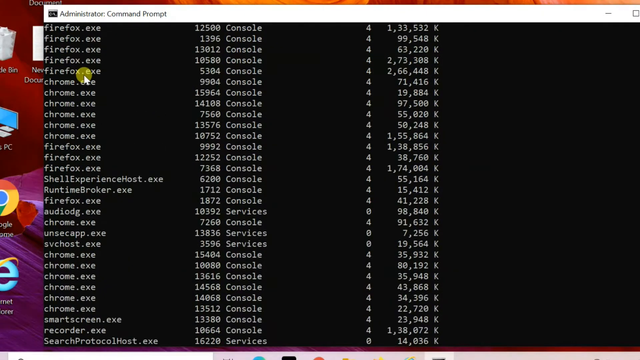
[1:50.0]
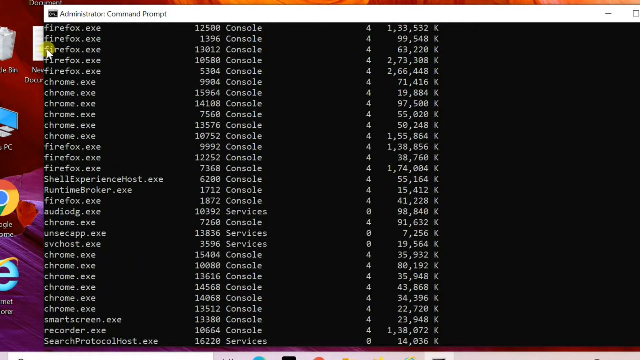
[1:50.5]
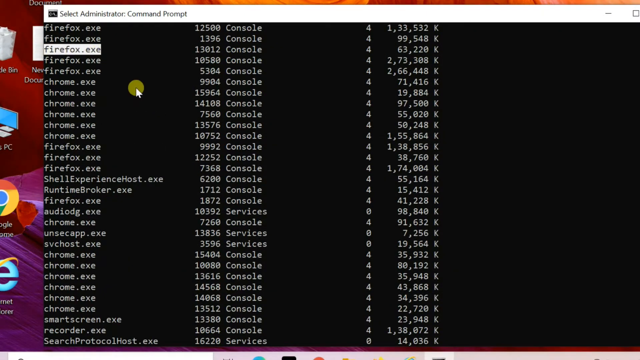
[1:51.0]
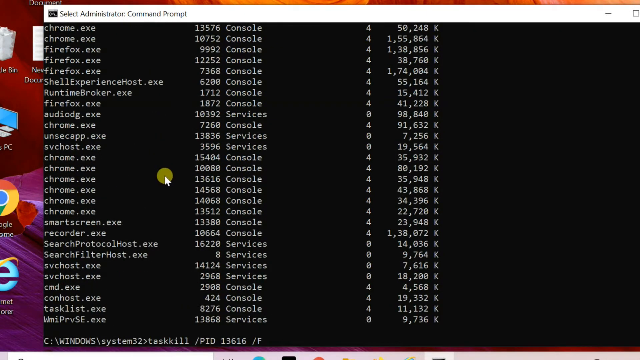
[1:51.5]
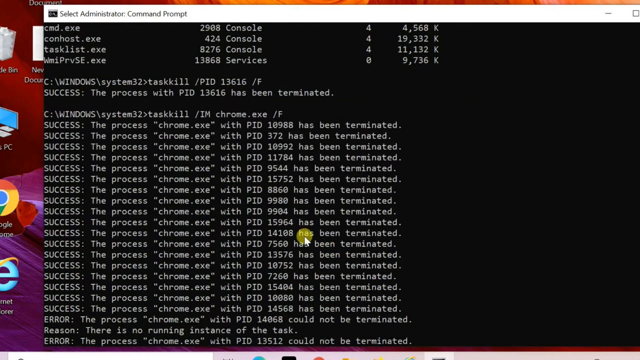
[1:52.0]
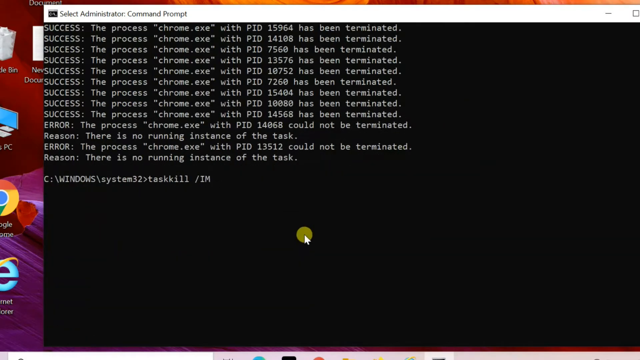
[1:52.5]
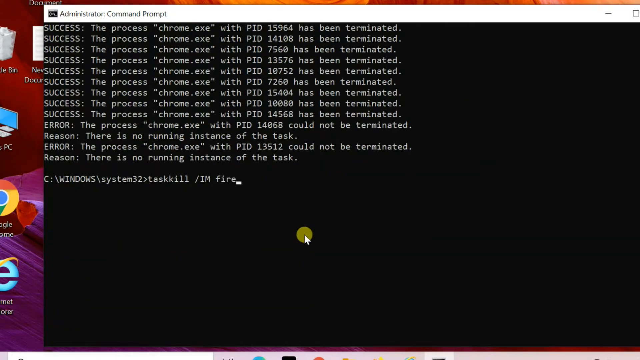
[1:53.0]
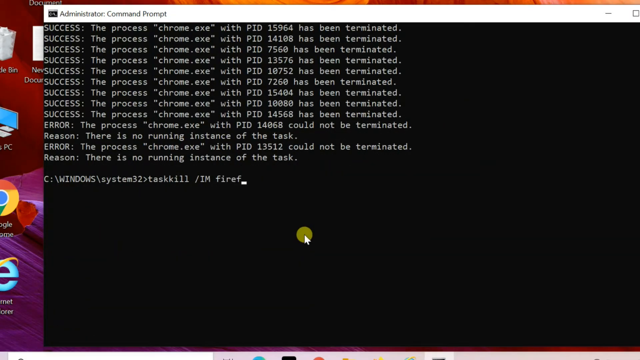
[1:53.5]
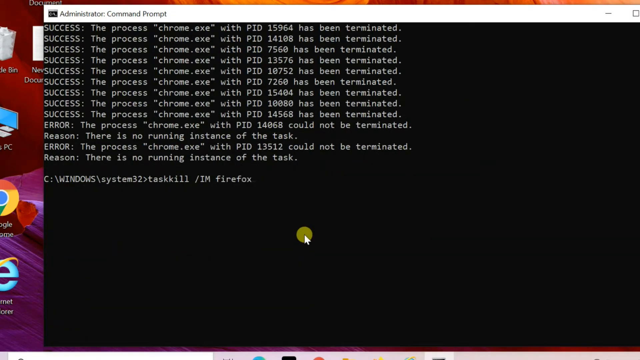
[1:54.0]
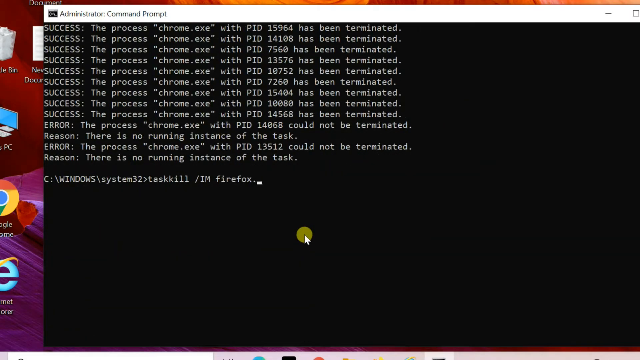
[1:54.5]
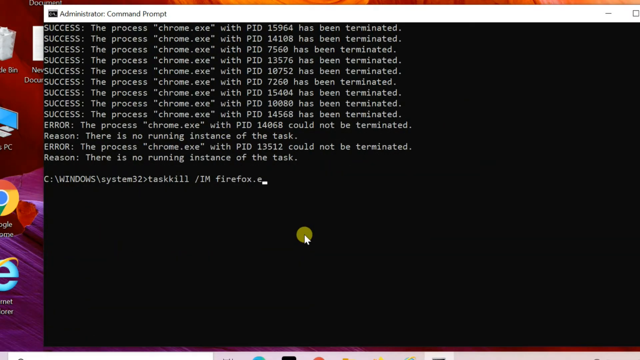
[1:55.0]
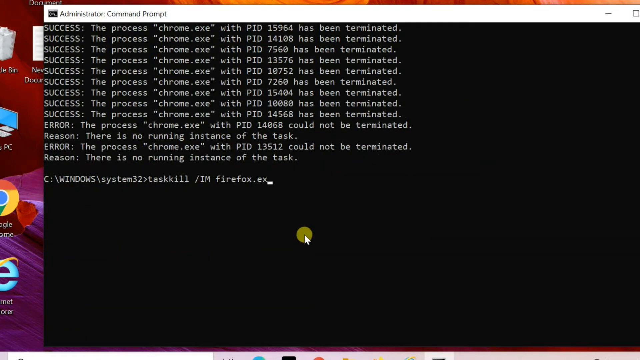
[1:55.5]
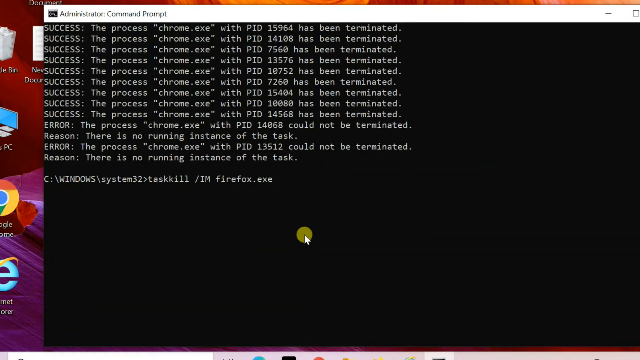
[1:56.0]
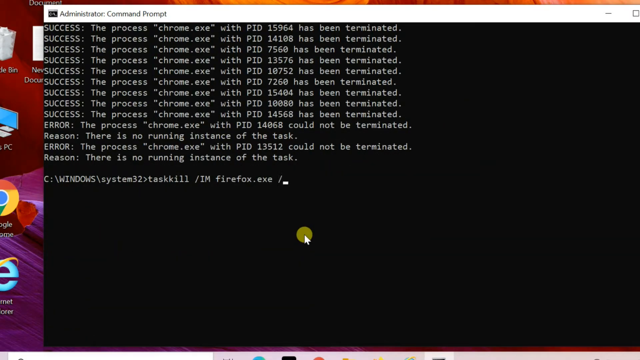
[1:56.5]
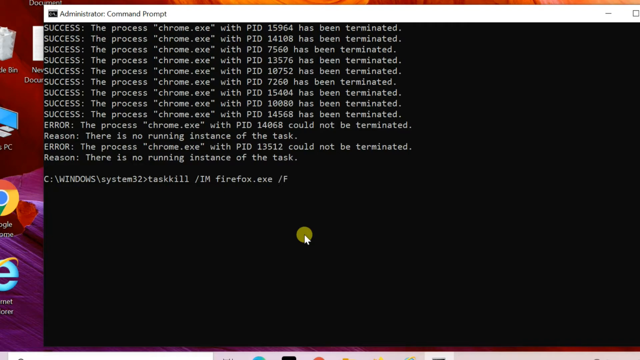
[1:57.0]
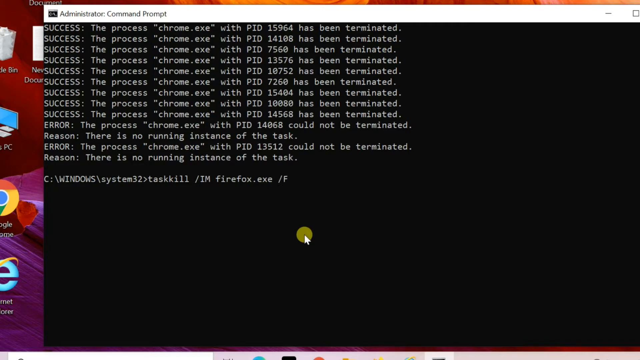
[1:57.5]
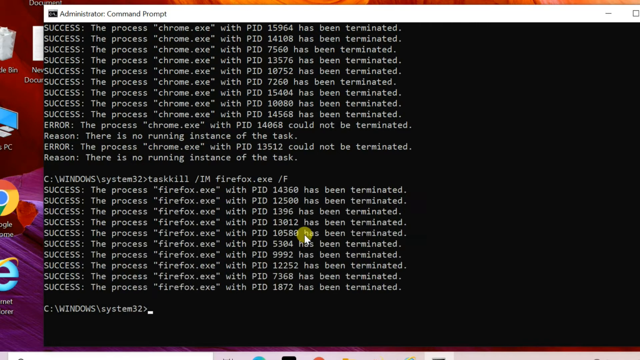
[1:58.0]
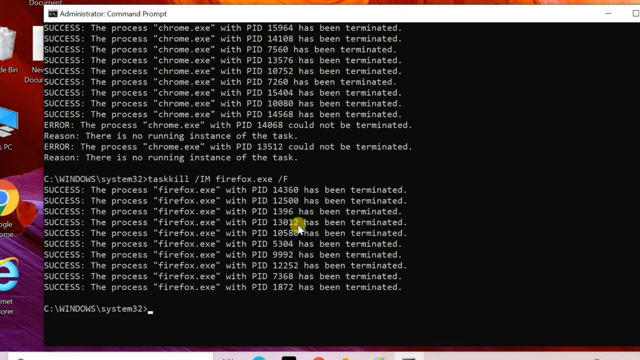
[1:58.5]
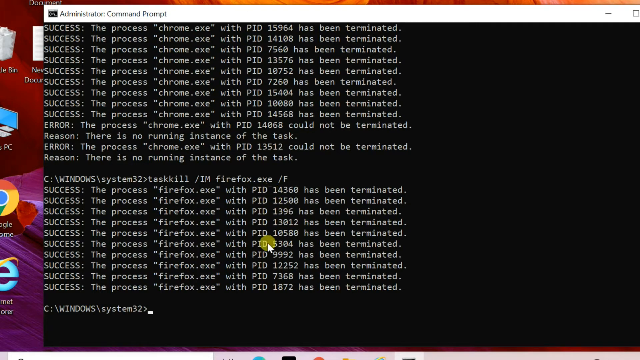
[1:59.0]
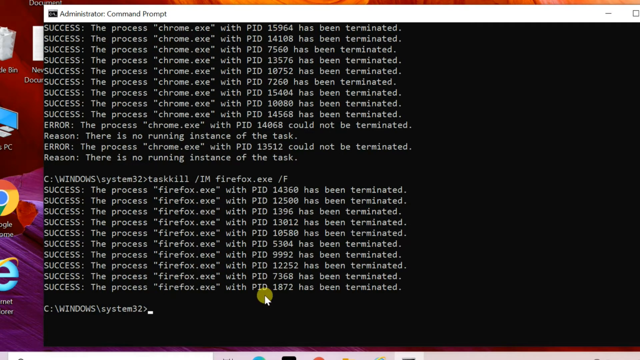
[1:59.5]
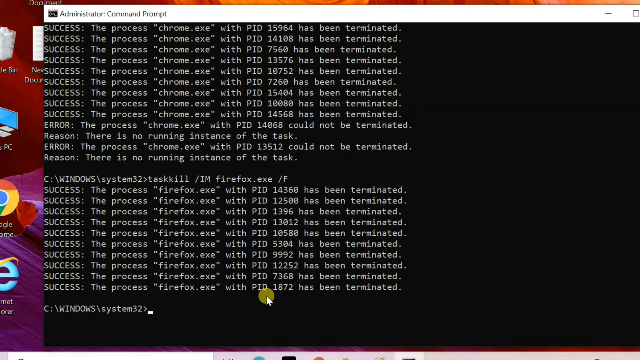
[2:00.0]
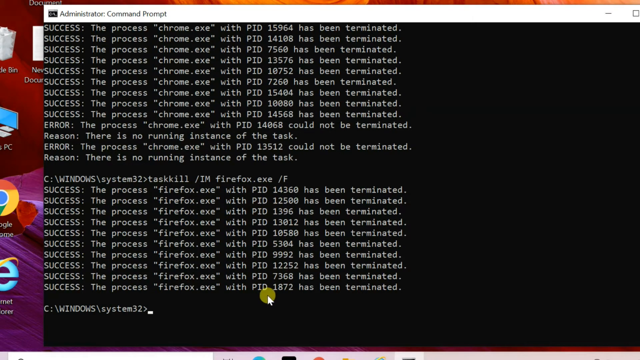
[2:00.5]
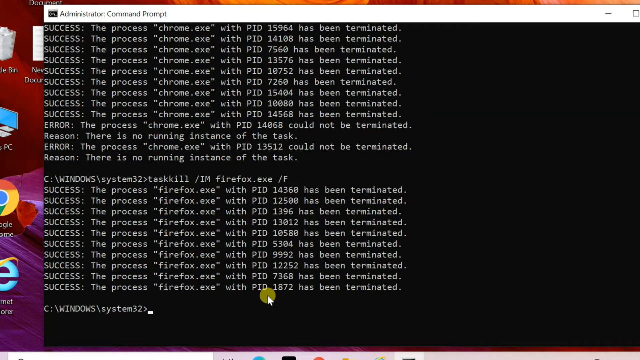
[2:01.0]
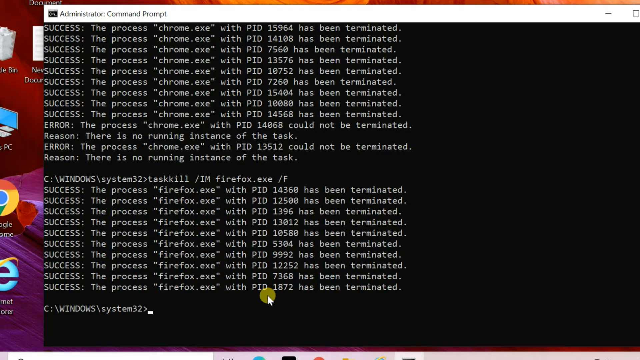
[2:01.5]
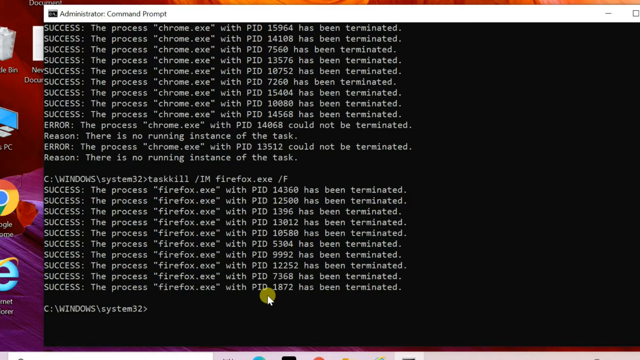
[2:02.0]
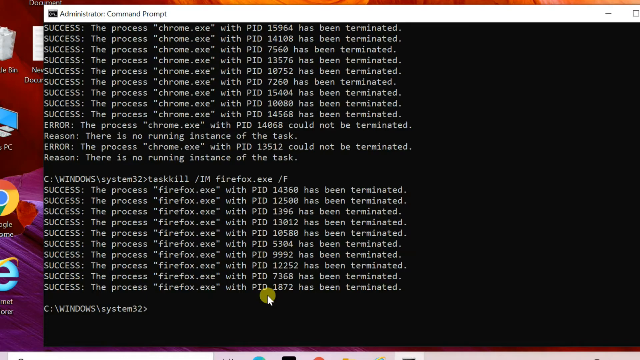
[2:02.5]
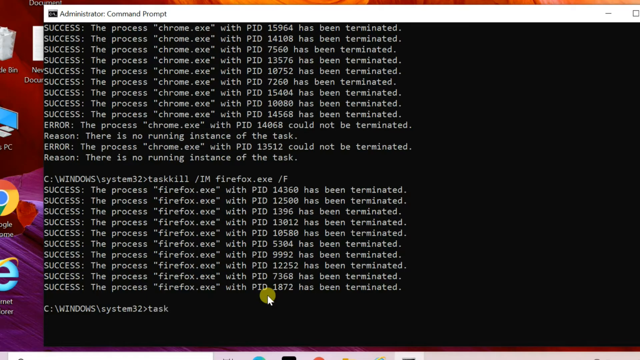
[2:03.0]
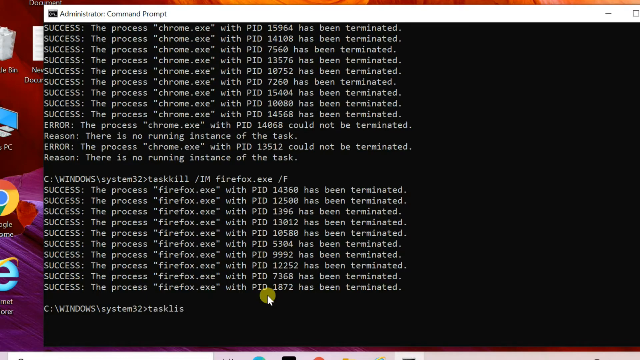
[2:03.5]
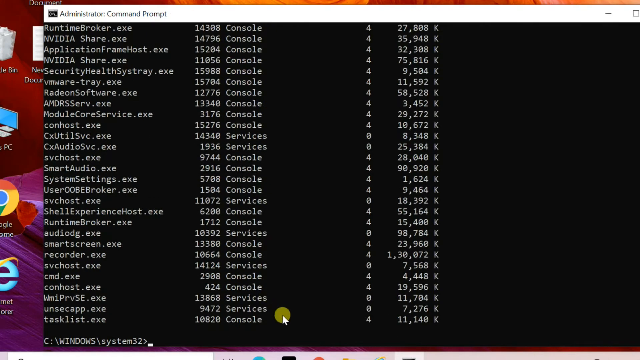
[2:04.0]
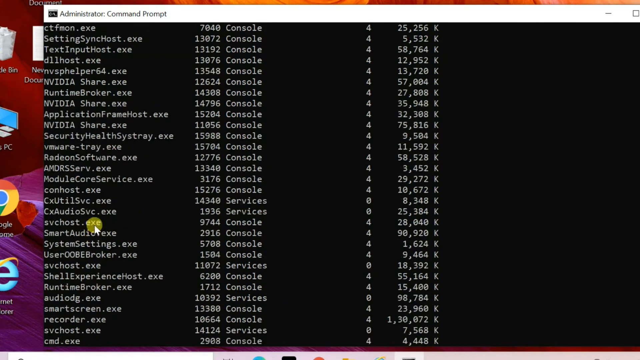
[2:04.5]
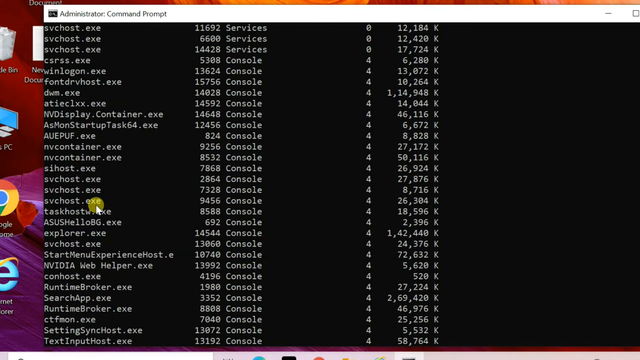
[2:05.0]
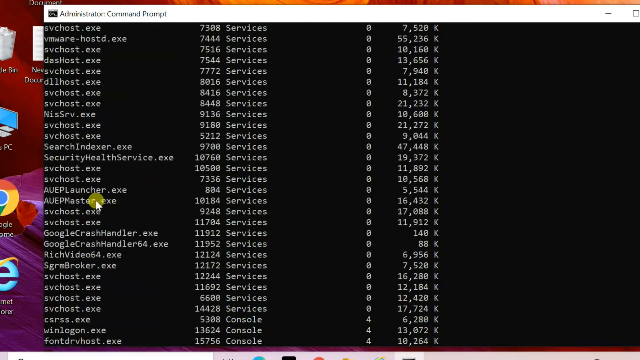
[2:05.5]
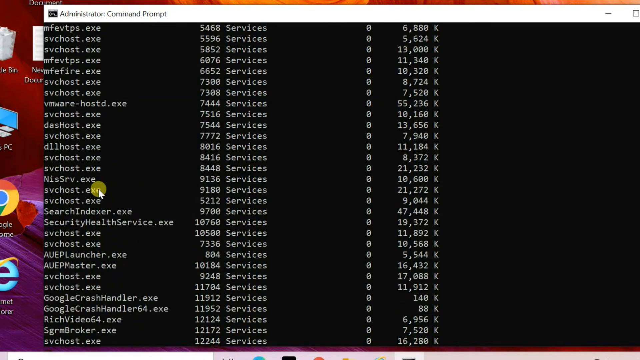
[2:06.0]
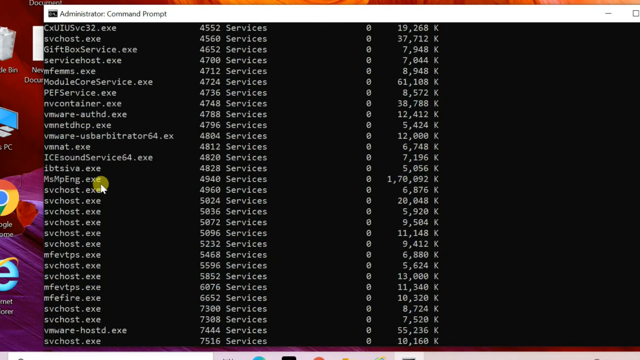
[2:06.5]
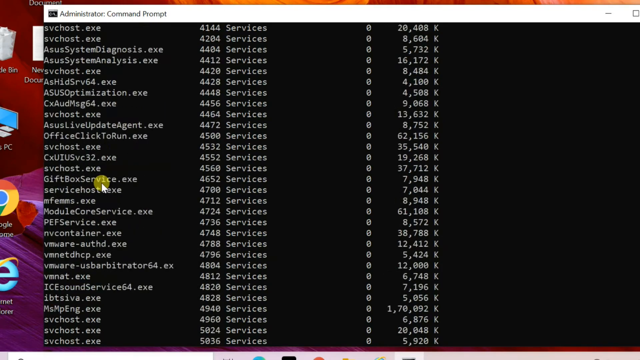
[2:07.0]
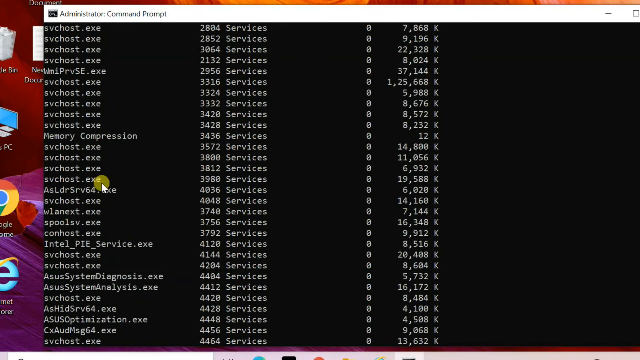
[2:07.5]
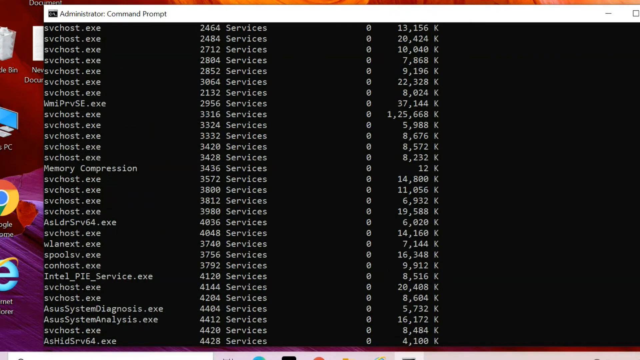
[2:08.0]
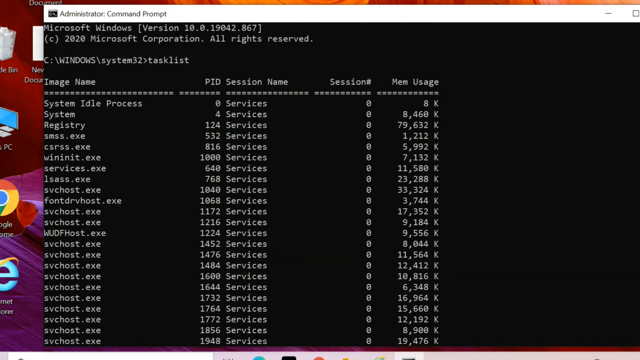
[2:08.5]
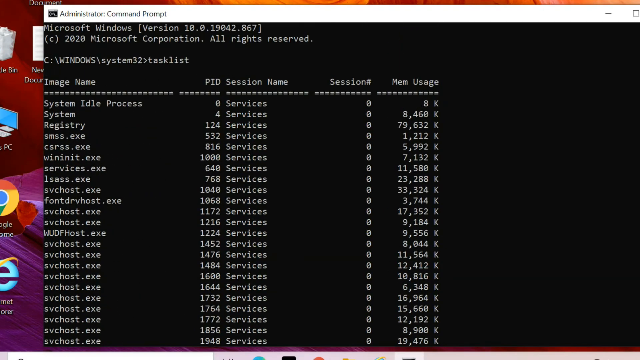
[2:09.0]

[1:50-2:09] The same image-name procedure is used, this time with Firefox instead of Chrome: taskkill /IM firefox.exe /F. The readout says the process firefox.exe with its PID has been terminated. The user then goes back to the task list and points out that Firefox and Chrome are now missing from it.